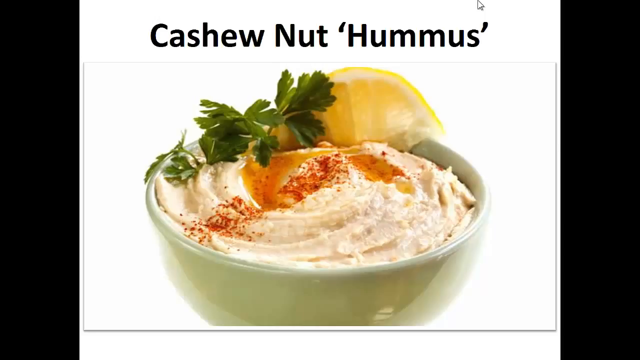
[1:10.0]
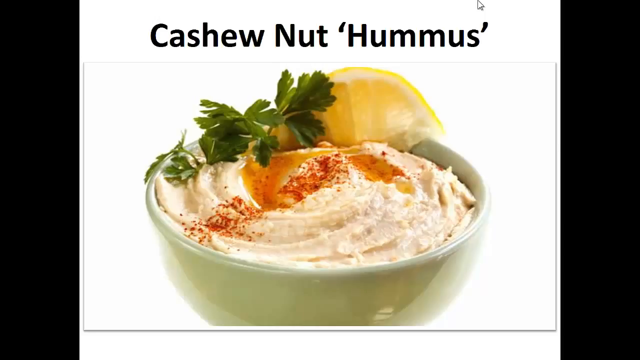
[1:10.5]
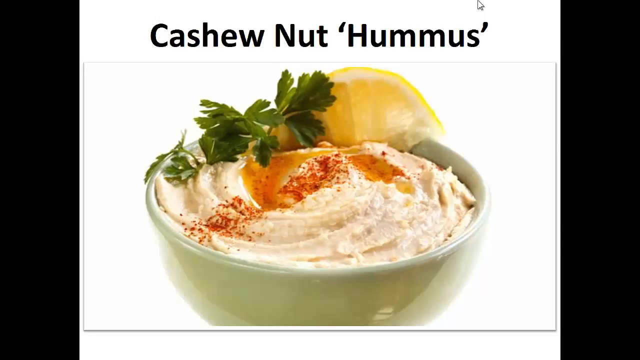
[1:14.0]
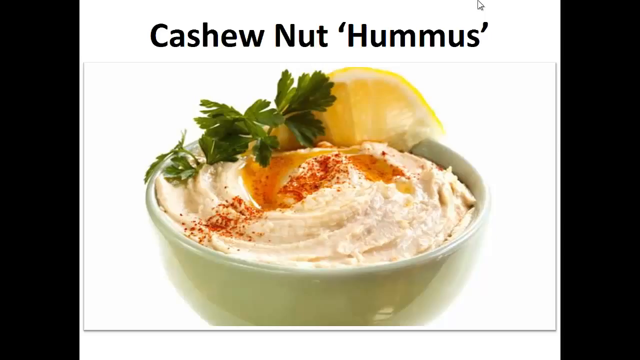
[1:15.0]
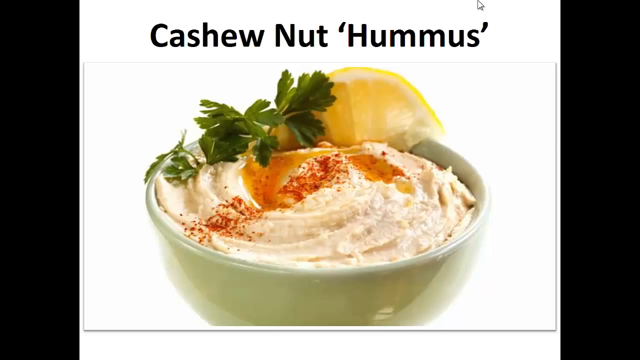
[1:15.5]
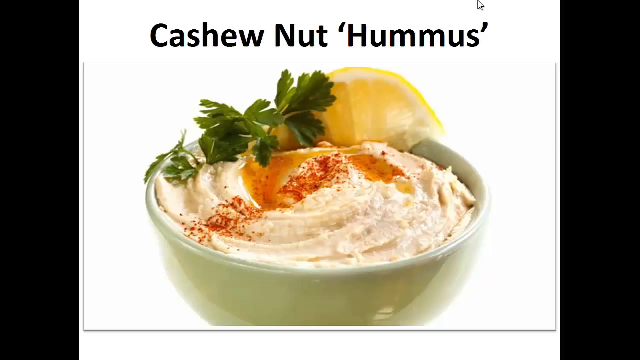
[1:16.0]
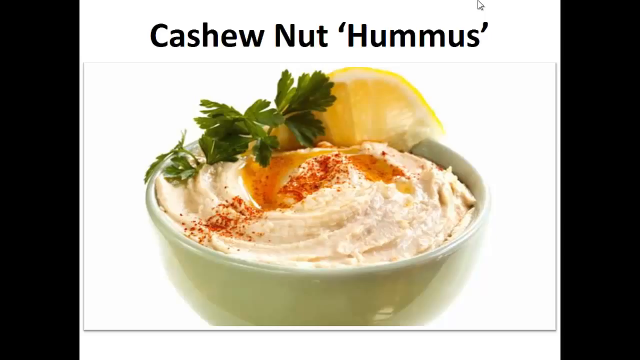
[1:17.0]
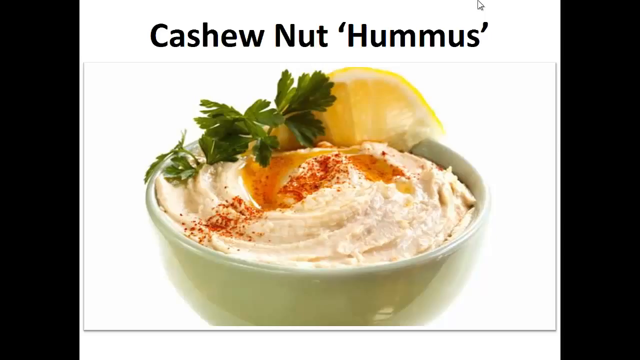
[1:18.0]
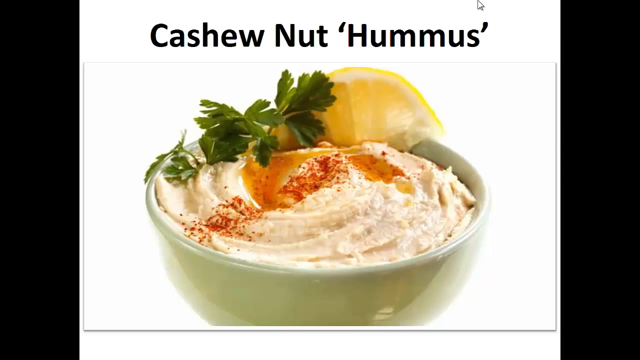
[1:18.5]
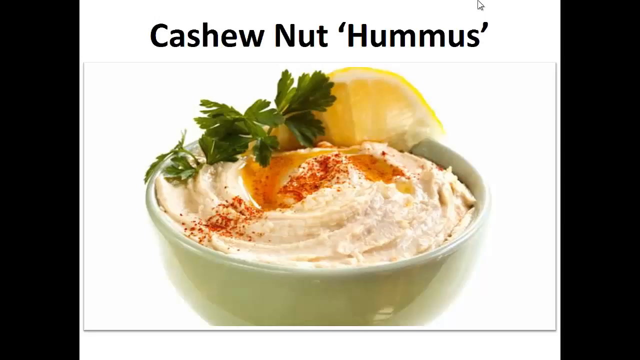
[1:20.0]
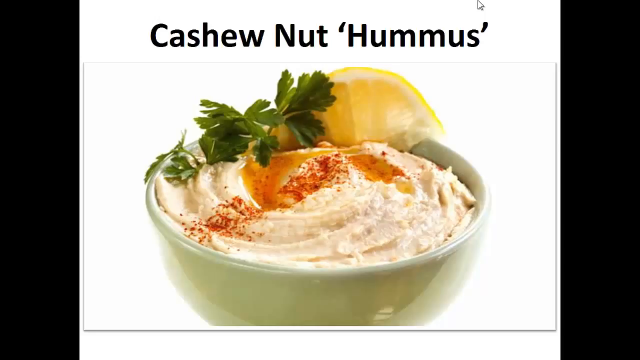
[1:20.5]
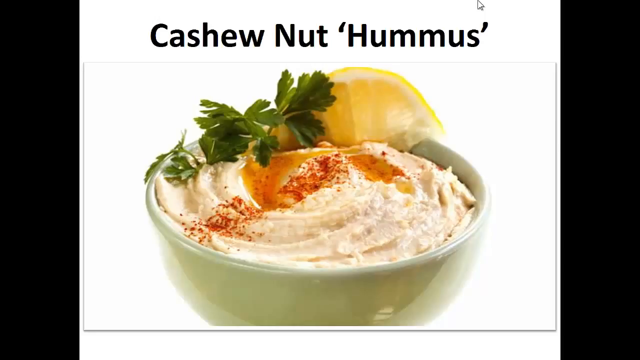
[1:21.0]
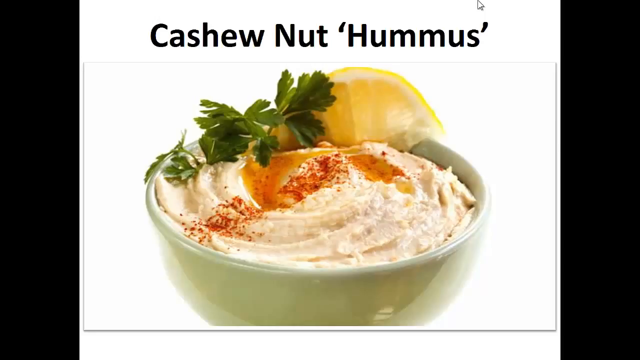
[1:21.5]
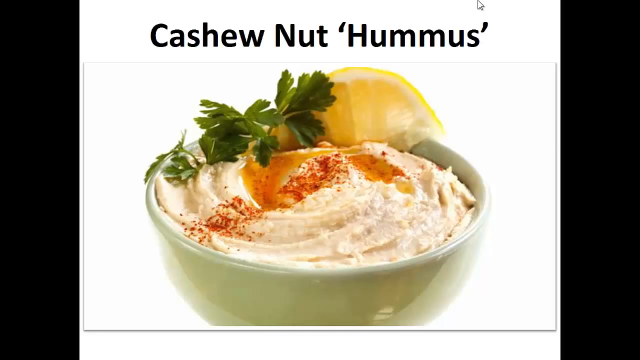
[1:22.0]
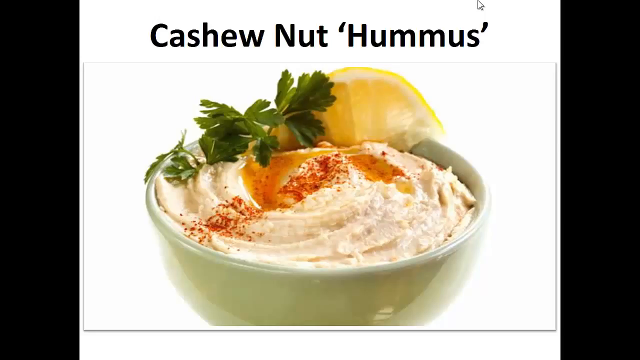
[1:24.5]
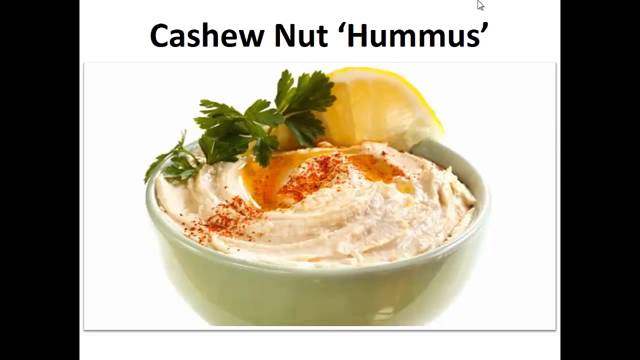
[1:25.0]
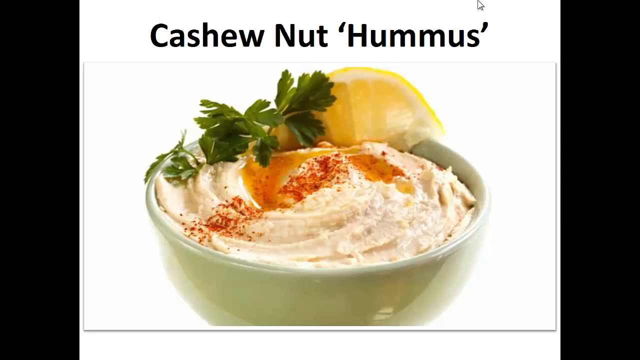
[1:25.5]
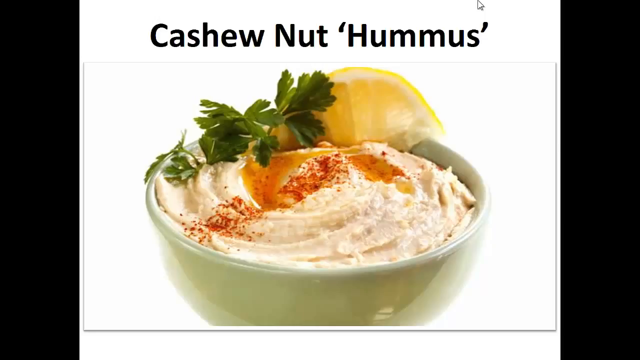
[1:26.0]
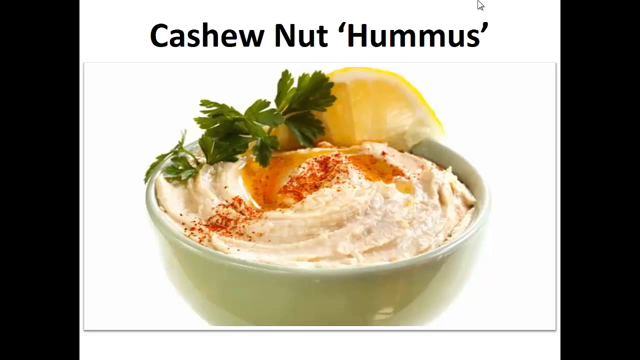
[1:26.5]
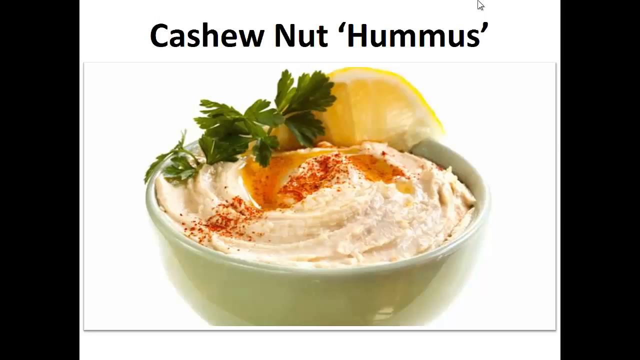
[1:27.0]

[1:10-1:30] The same image of the cashew nut hummus continues, with the title "cashew nut hummus" at the top of the screen in black lettering. The picture shows what looks to be some type of yogurt-like dish in a bowl, with orange flavoring and seasoning on top. Toward the back edge of the bowl are green leaves and a half piece of yellow lemon. The bowl is plastic and looks reflective, on a white background. The photo has white borders at the top and bottom and black borders on the left and right sides.